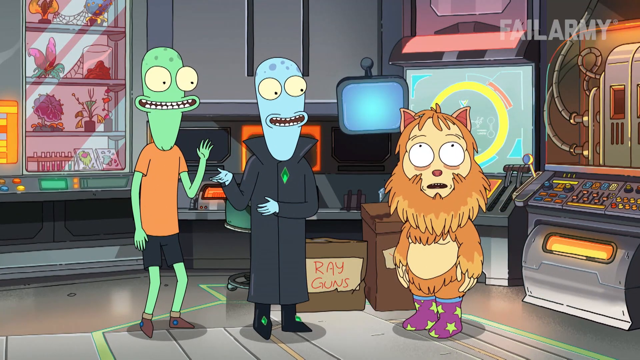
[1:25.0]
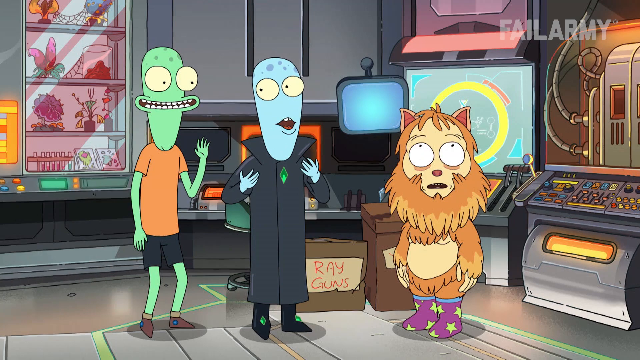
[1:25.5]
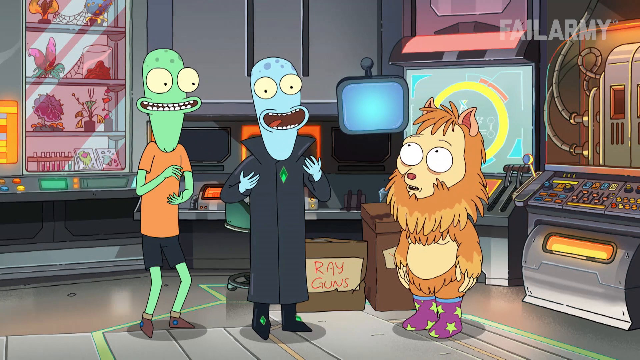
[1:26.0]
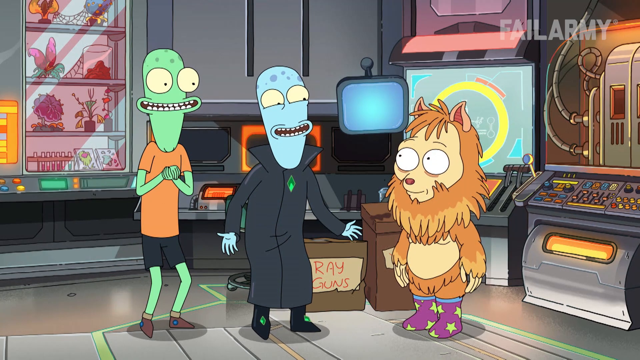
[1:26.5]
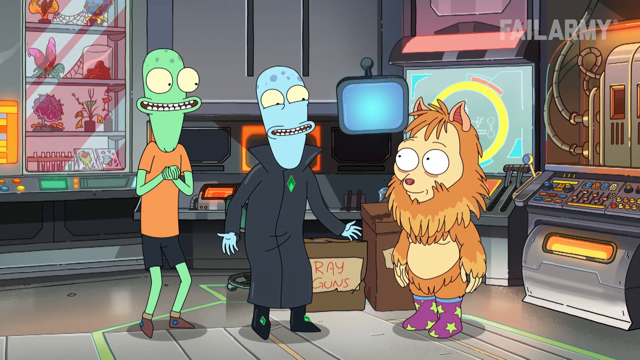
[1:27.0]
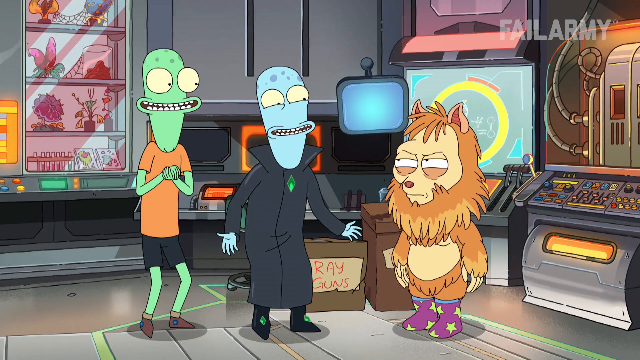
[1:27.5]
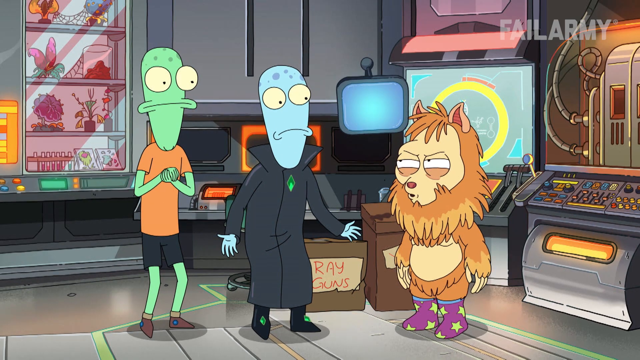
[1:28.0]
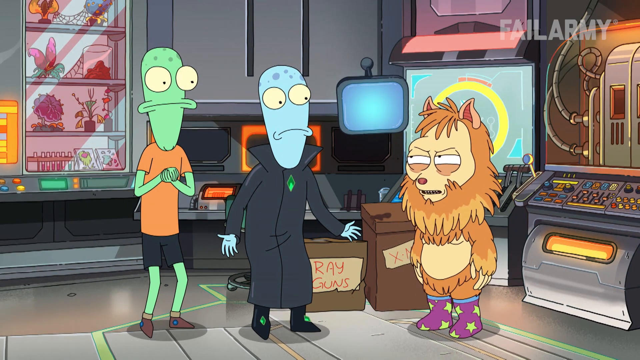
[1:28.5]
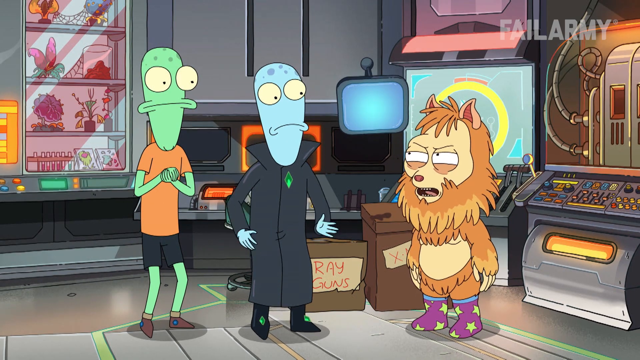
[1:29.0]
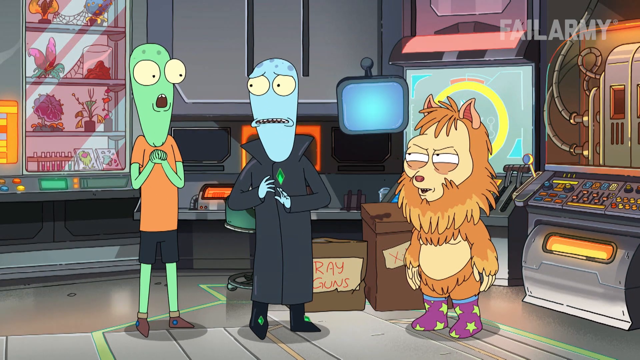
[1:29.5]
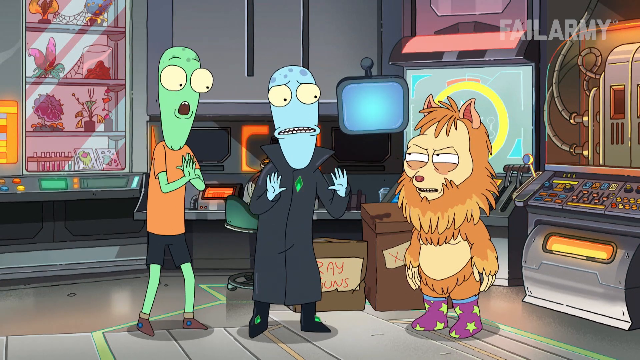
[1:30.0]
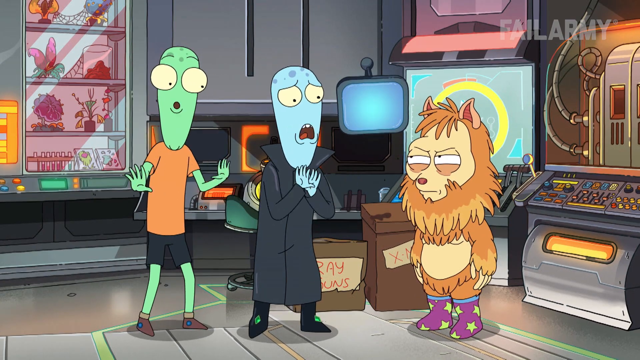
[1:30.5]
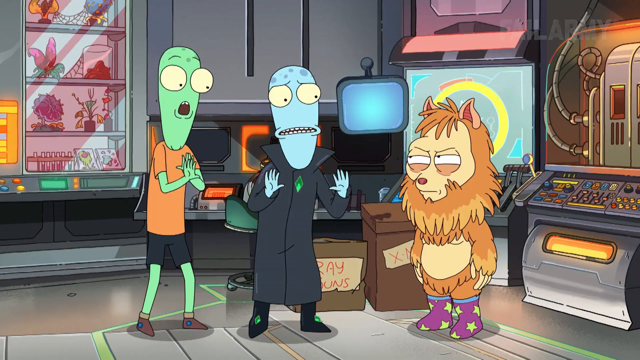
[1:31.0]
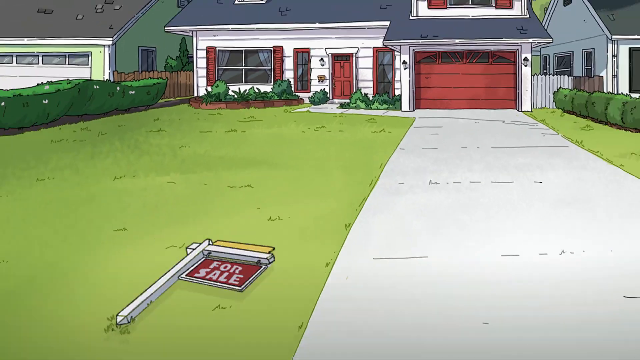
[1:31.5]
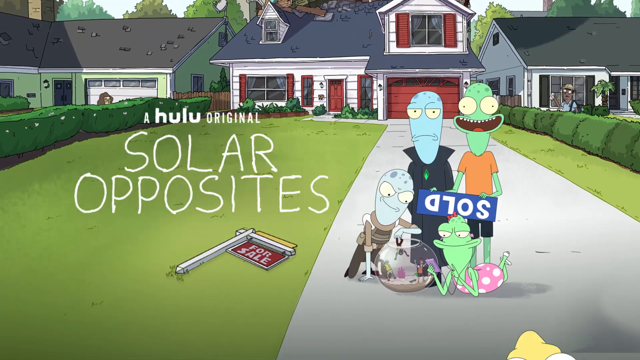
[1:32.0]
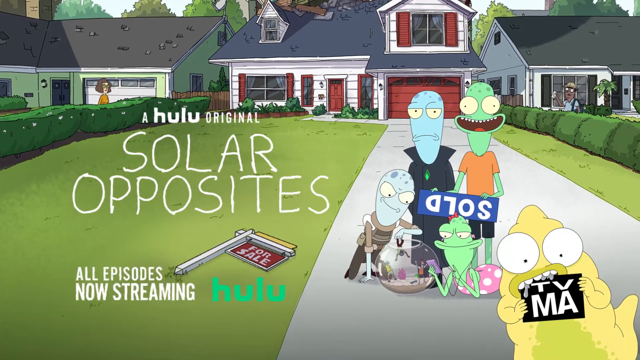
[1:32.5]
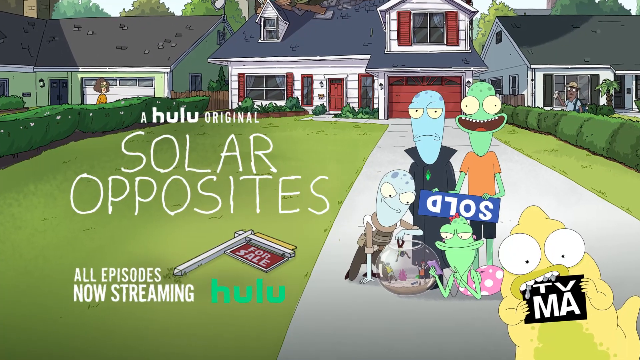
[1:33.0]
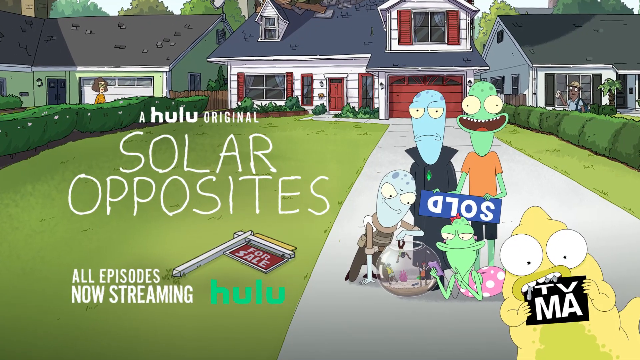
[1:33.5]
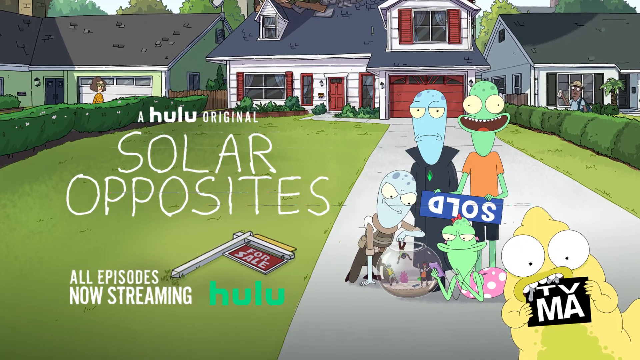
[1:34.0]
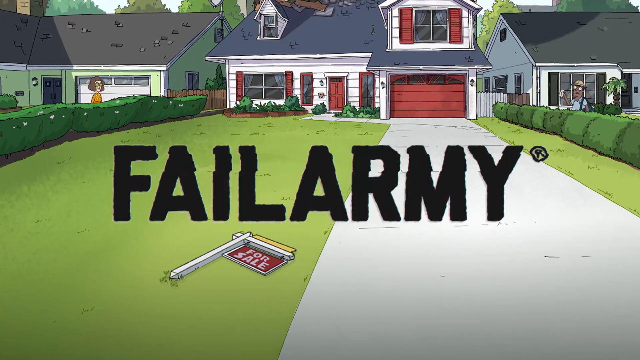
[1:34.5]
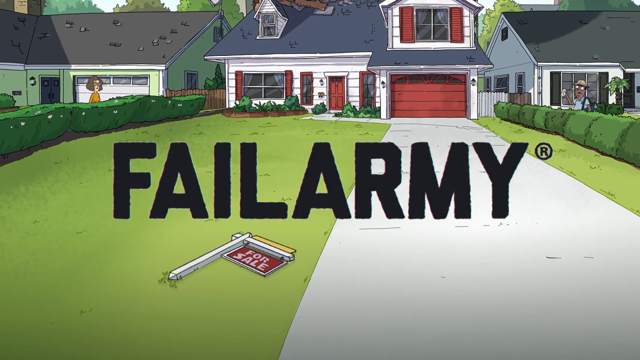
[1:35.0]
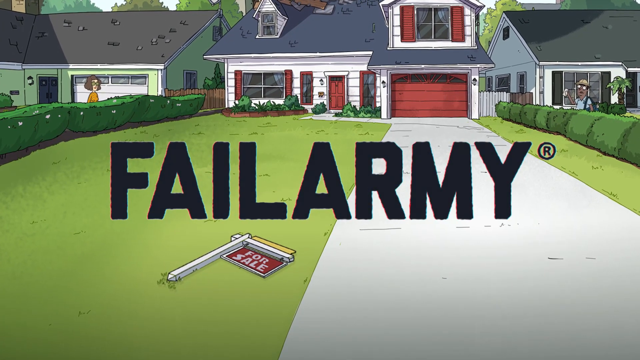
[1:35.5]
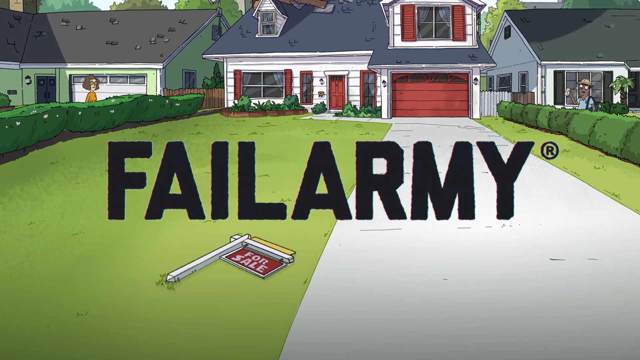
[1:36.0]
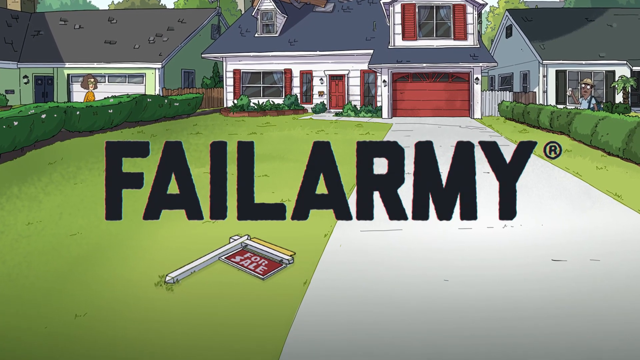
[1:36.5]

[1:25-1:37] In the alien control room, the lion character talks to two alien creatures, one blue and one green. They wave their hands as if to say no, apparently trying to dissuade the lion character from doing something. The scene transitions to what looks like the front of a house with a for sale sign that is falling over. The aliens are holding a sign that says "sold." A logo reads "fail army," and text reads "solar opposite" and "a Hulu original." A "TVMA" rating is shown.